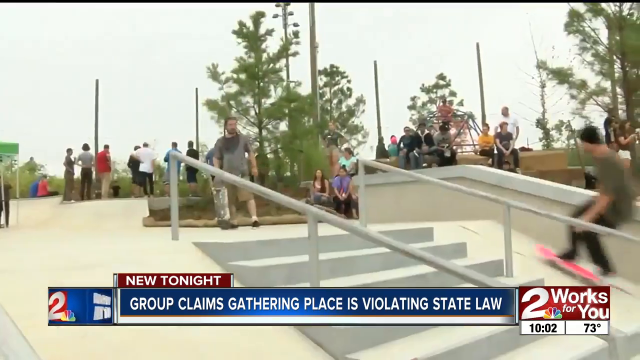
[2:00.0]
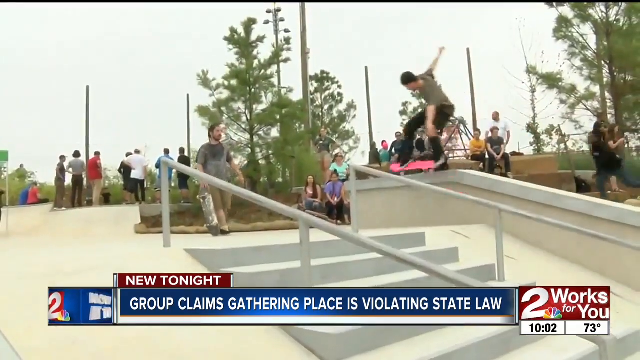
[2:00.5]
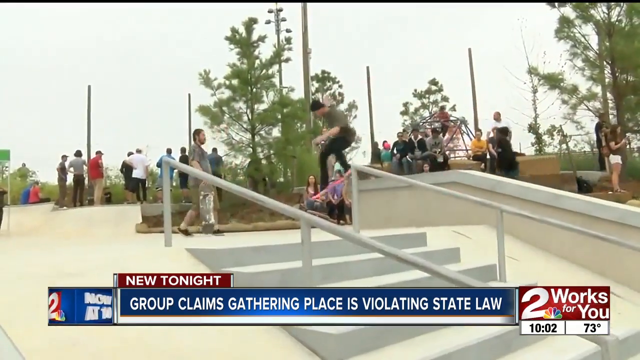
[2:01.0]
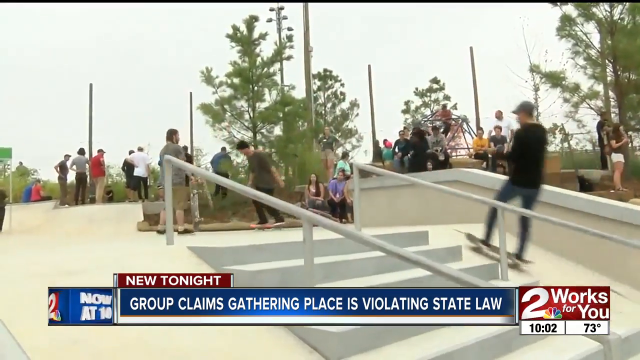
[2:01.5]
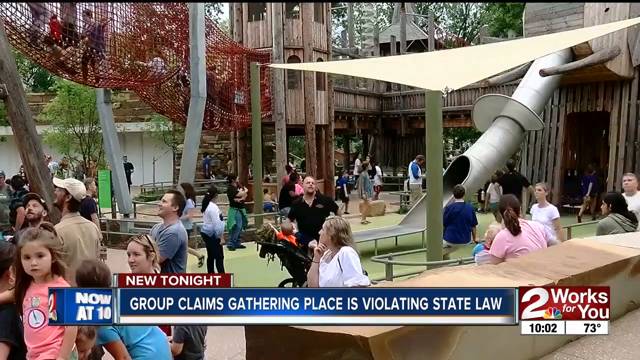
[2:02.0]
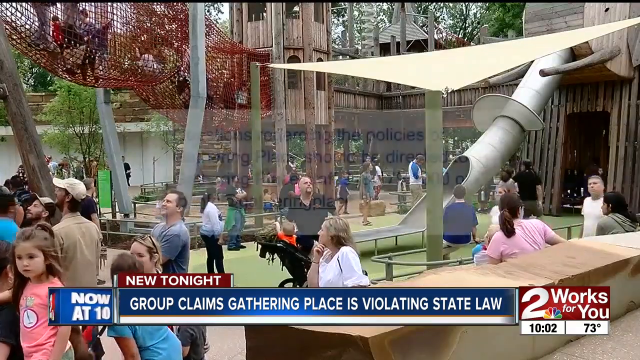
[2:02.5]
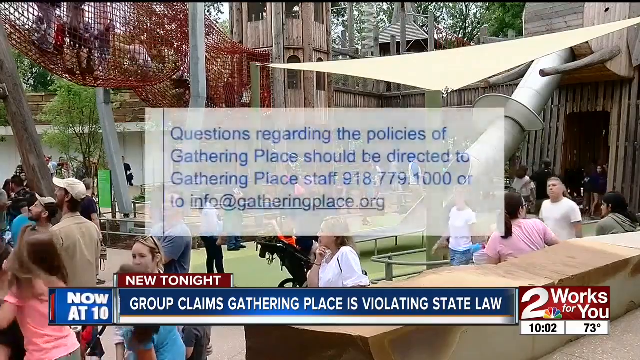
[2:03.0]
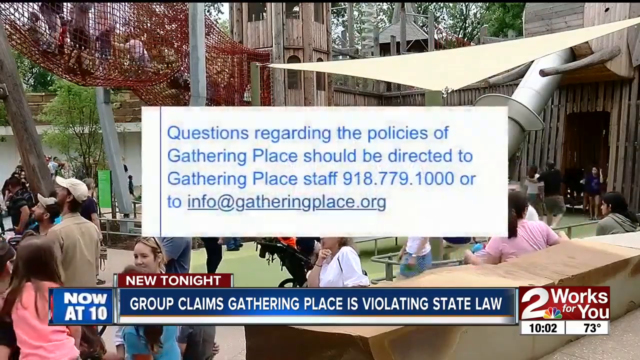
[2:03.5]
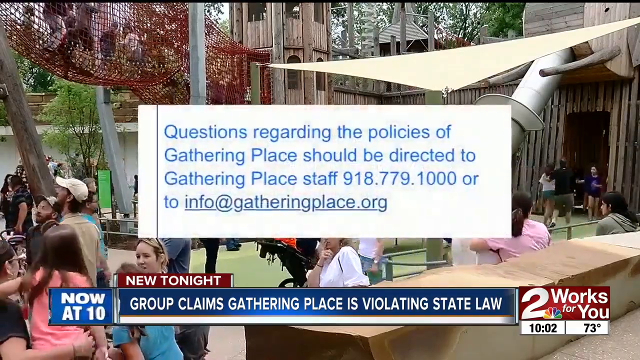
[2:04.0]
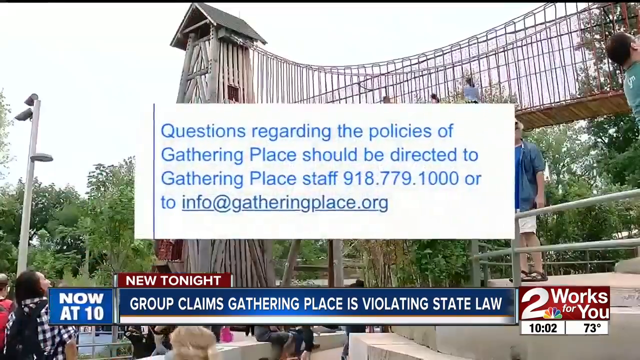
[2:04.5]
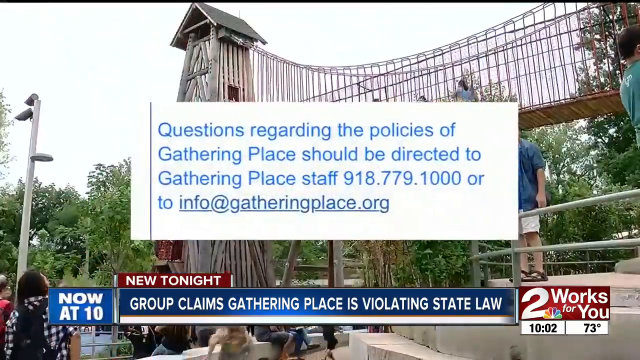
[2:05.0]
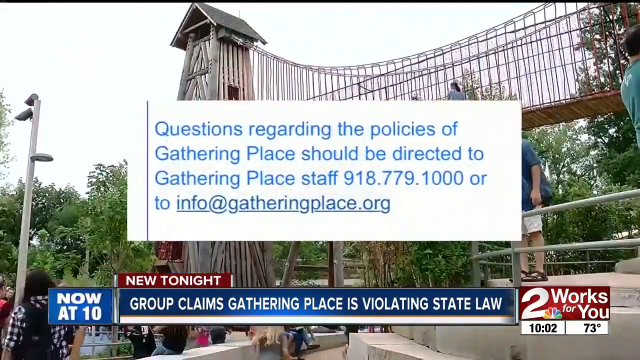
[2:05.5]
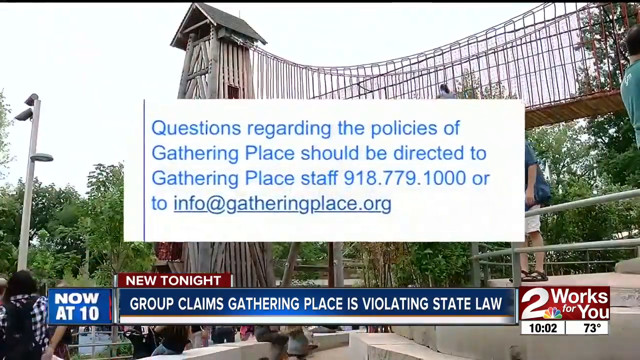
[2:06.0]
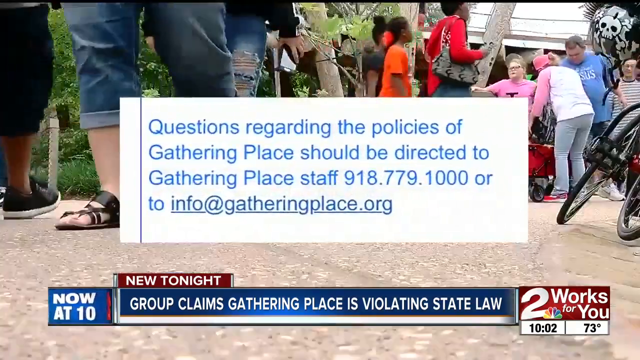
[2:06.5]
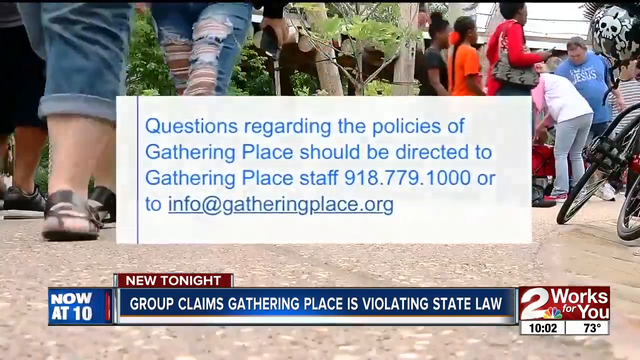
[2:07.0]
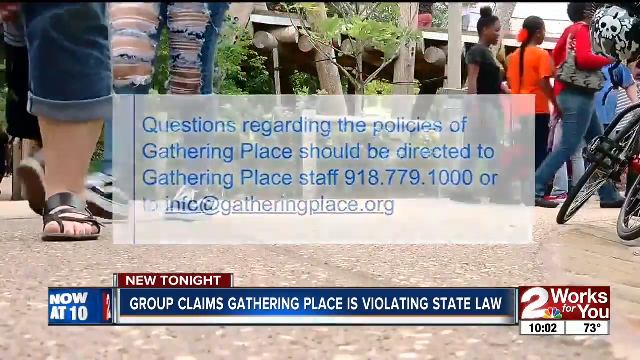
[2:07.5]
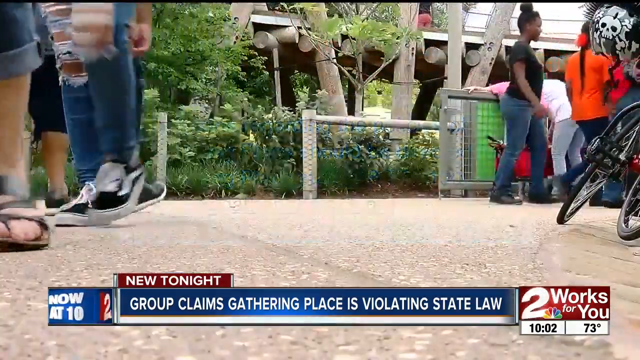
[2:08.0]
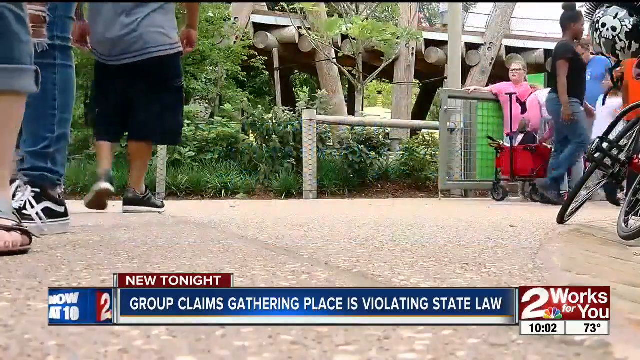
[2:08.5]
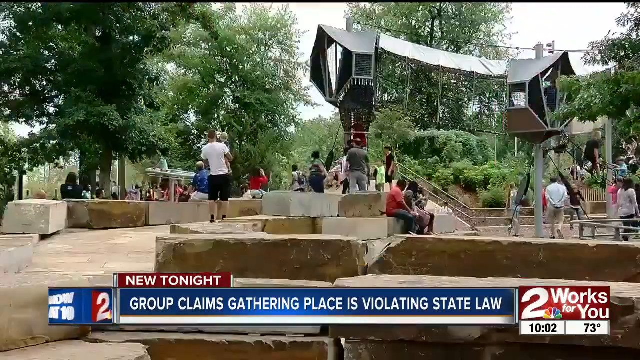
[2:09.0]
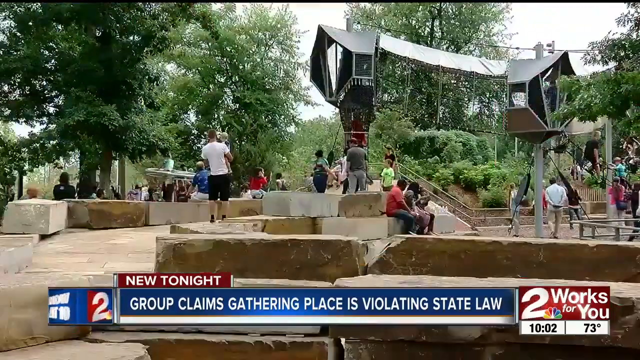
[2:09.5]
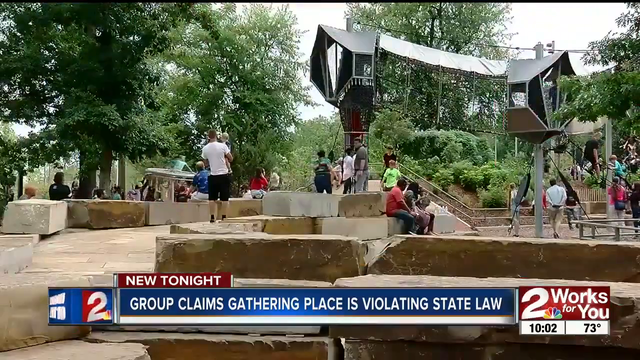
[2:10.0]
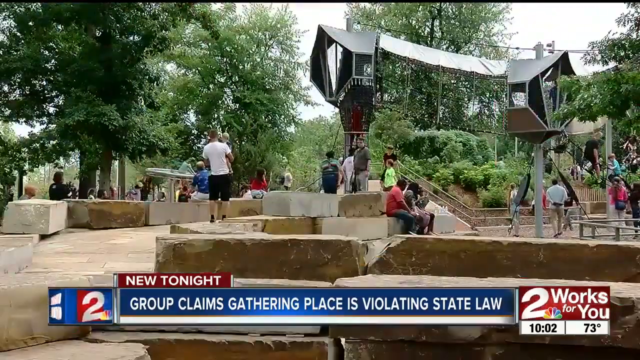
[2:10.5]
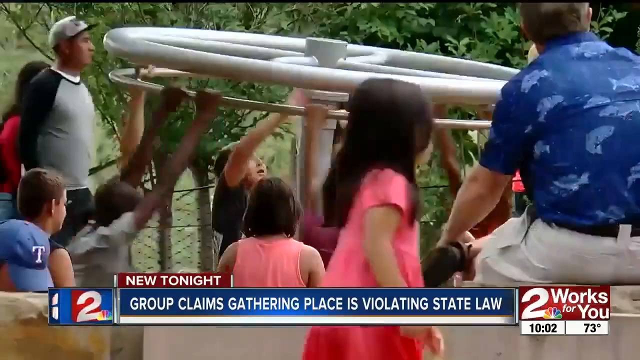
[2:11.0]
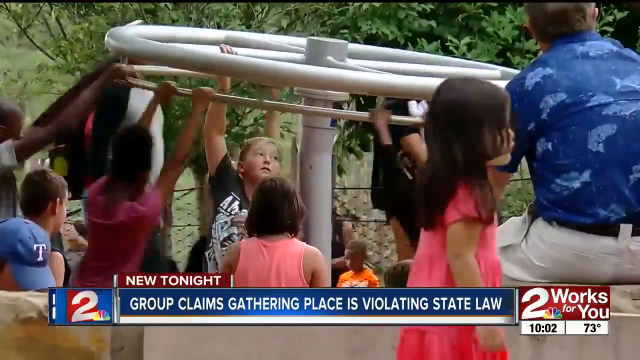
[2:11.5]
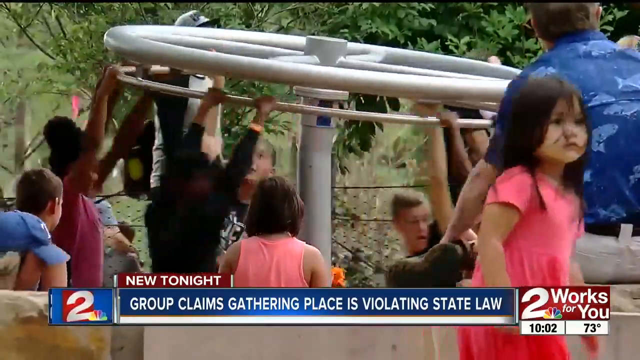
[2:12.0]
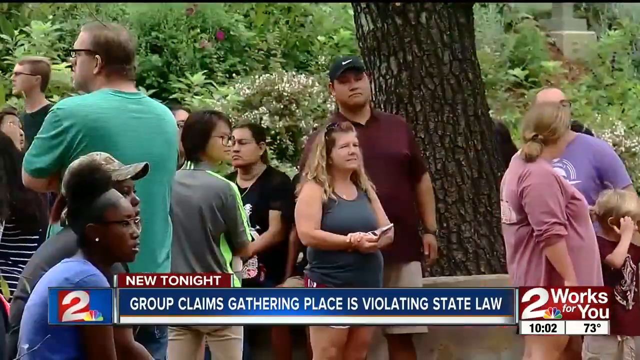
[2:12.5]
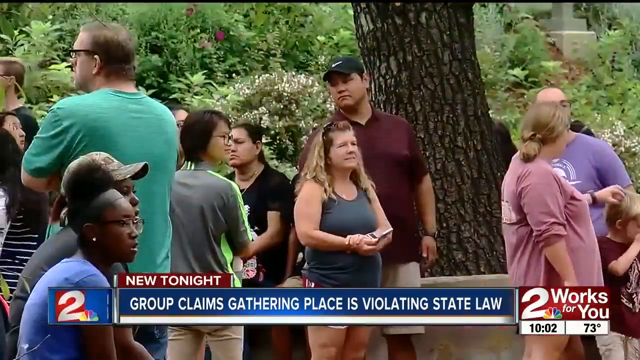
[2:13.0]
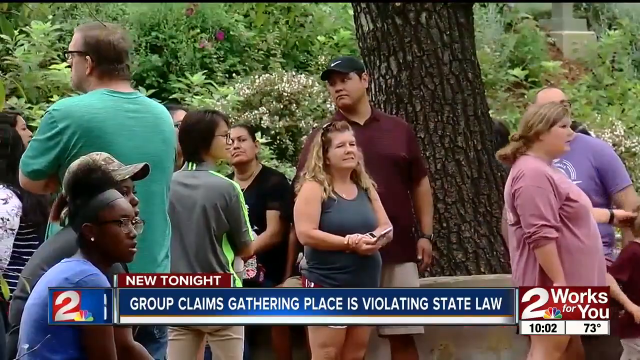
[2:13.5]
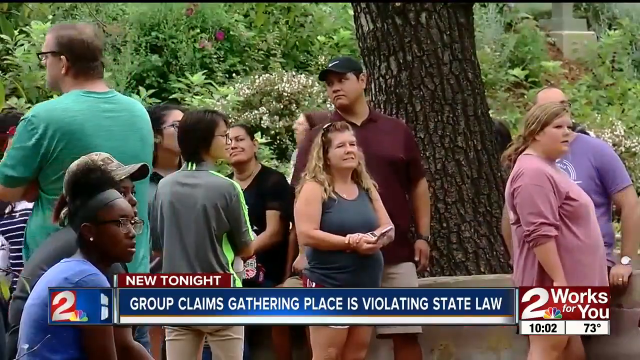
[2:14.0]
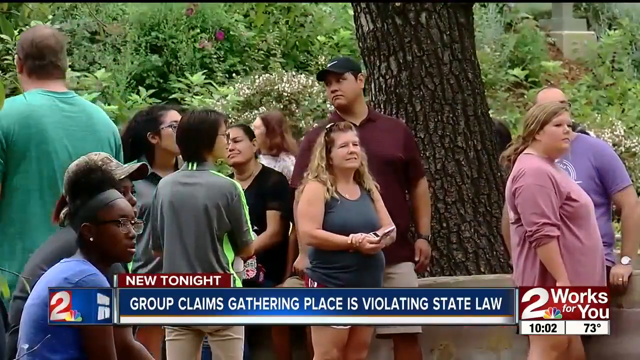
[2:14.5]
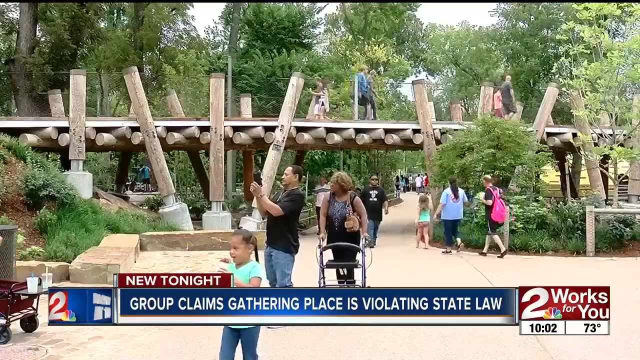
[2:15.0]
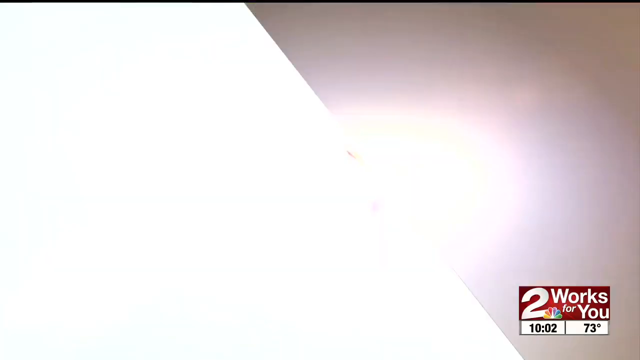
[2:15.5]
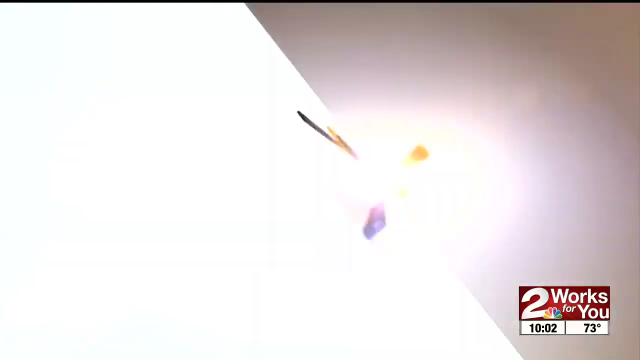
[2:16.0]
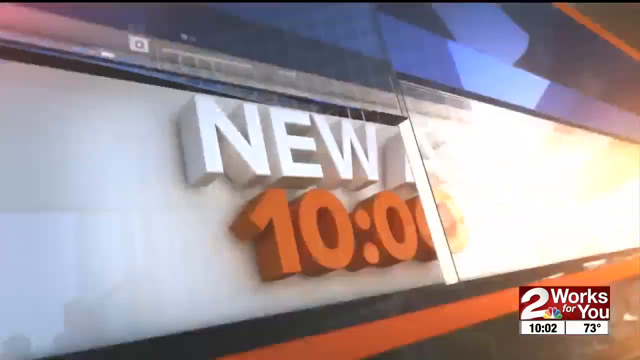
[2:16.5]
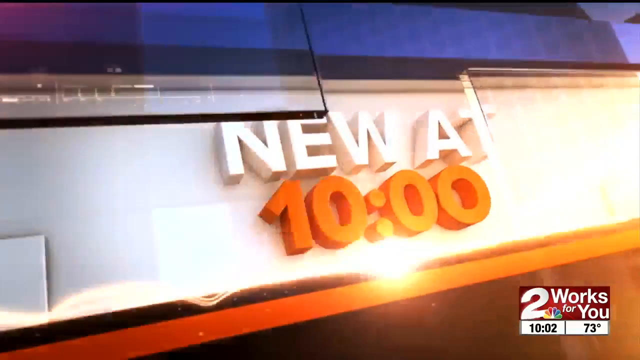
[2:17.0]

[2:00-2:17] Children skateboard, and people are next to a bridge with some children. On-screen text says "the question regarding the policy of gathering places should be directed to" the gathering place staff, with a phone number and a website. In the background, a couple of people walk around, along with children and people gathered at the place. A news station is shown while people at the place are filmed walking around, doing things and skateboarding. The place is filled with swing sets, and the people around them seem to enjoy it; children are playing.